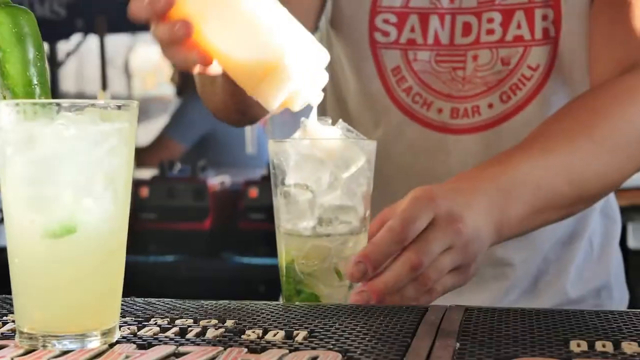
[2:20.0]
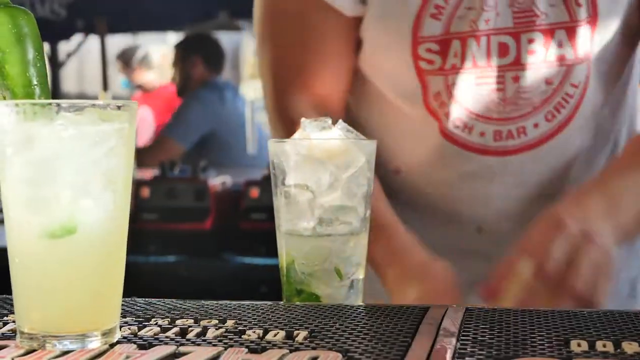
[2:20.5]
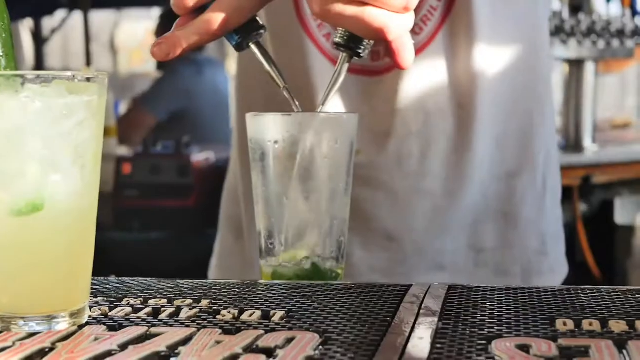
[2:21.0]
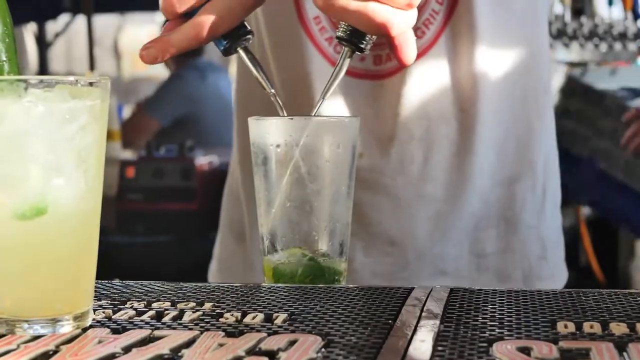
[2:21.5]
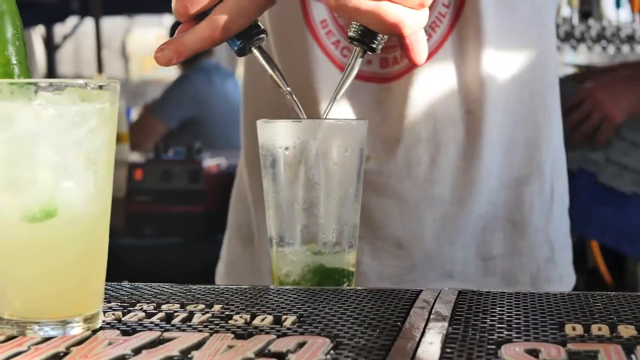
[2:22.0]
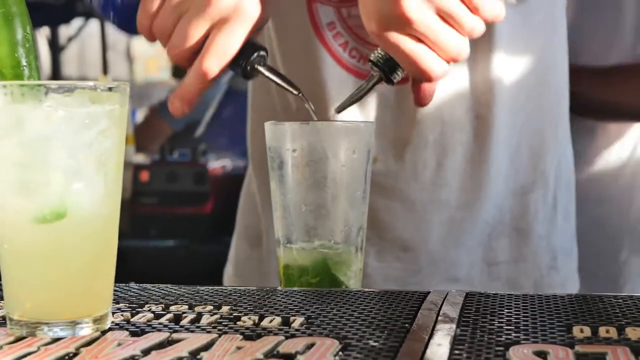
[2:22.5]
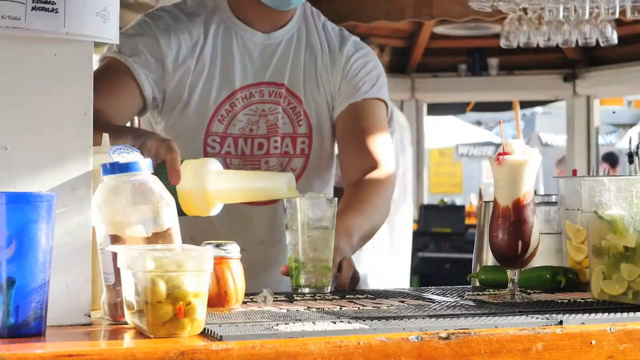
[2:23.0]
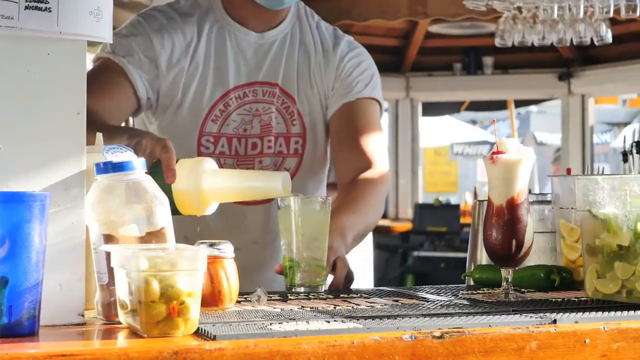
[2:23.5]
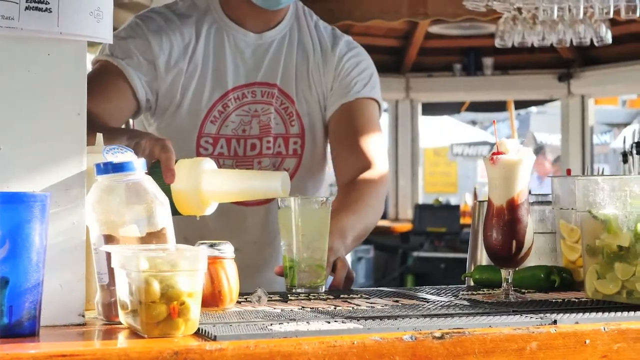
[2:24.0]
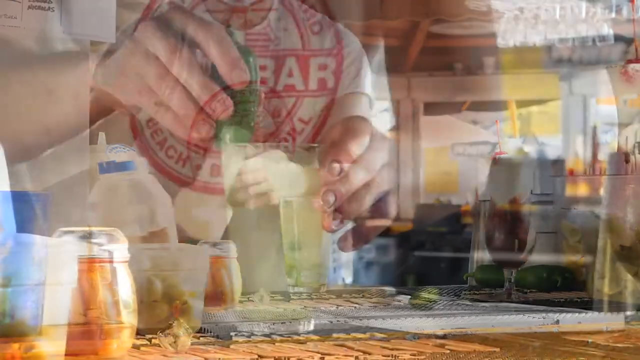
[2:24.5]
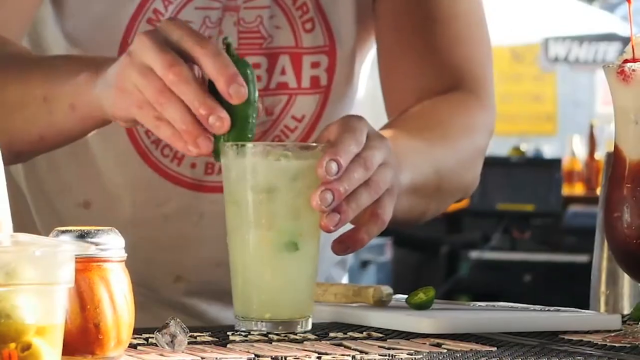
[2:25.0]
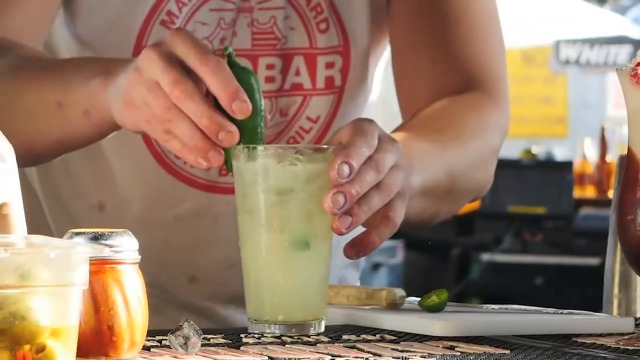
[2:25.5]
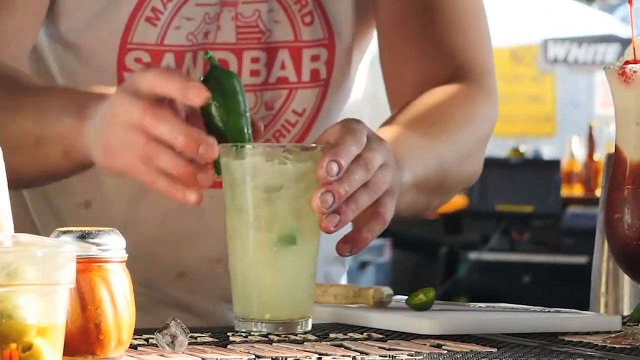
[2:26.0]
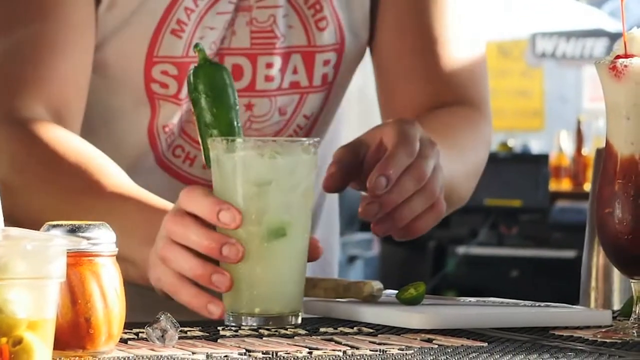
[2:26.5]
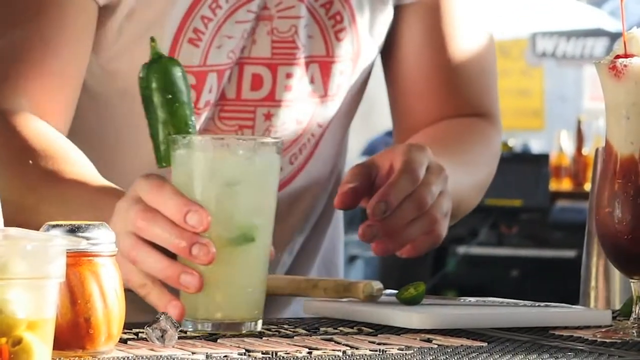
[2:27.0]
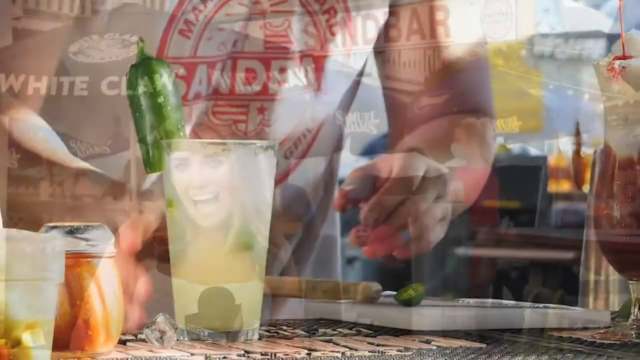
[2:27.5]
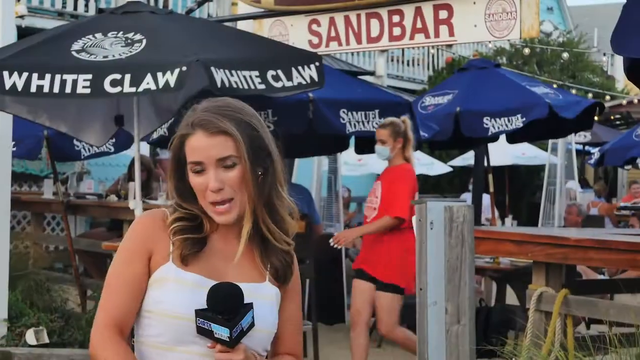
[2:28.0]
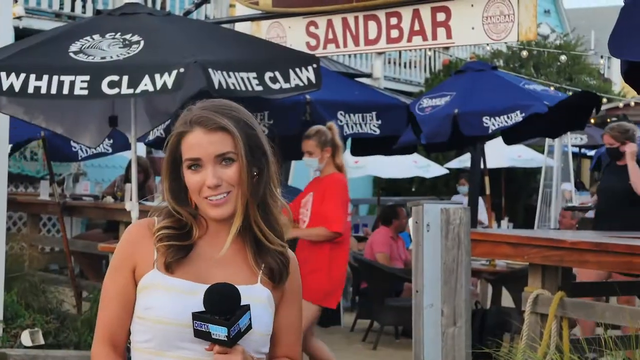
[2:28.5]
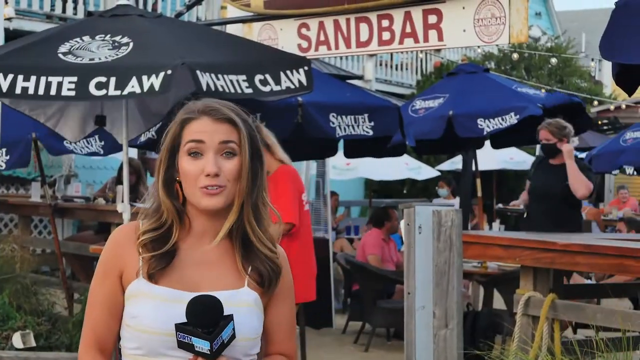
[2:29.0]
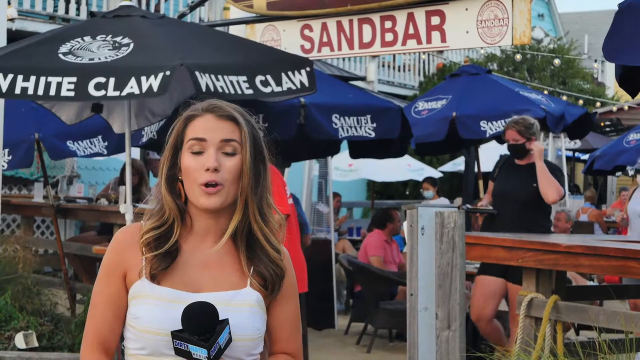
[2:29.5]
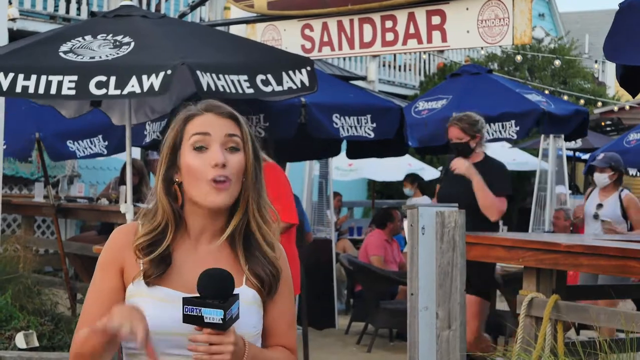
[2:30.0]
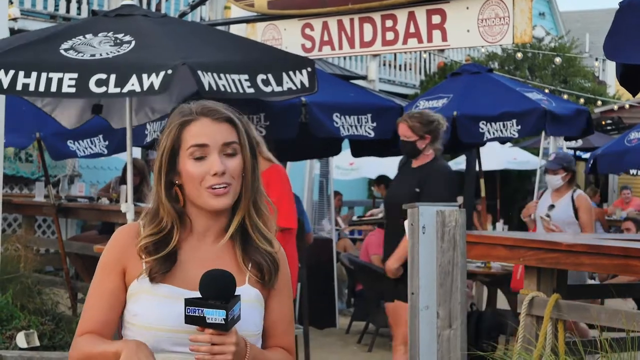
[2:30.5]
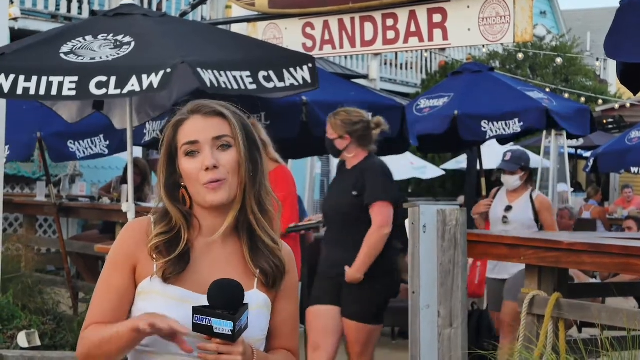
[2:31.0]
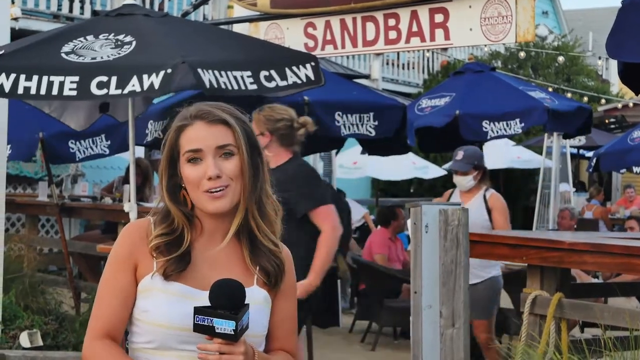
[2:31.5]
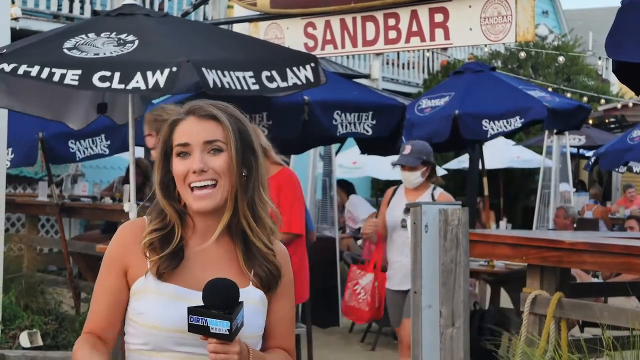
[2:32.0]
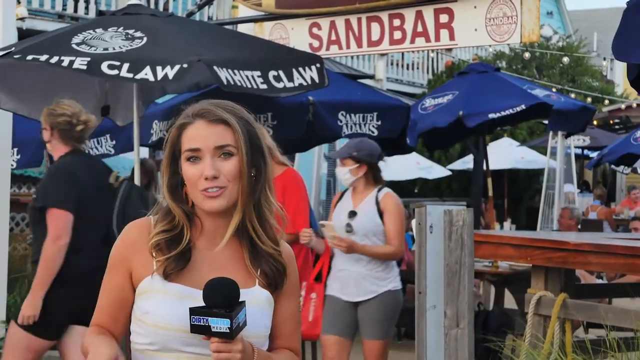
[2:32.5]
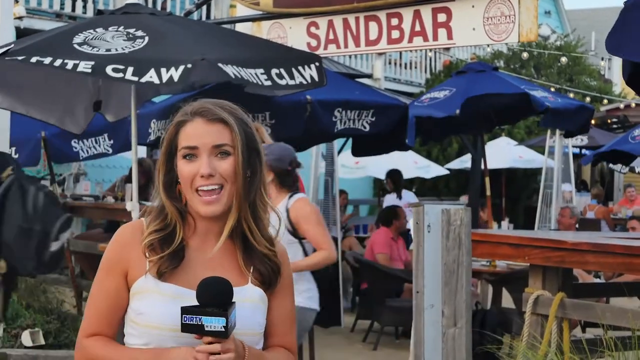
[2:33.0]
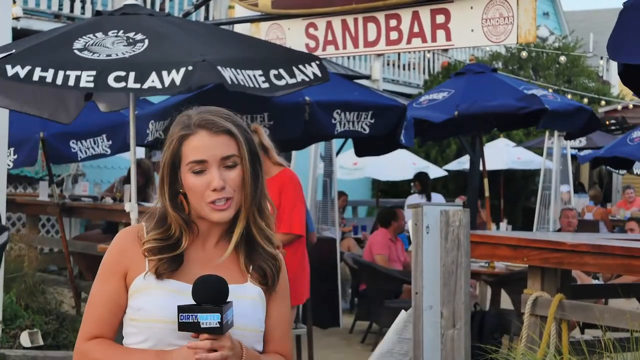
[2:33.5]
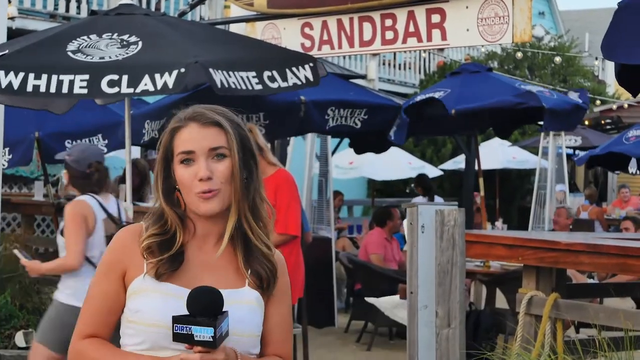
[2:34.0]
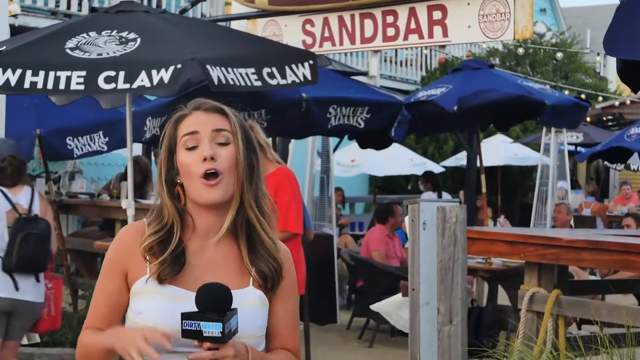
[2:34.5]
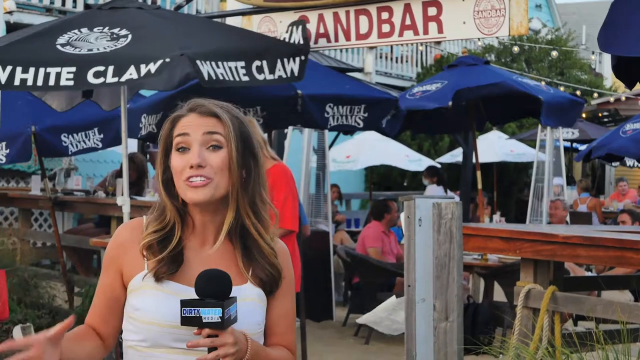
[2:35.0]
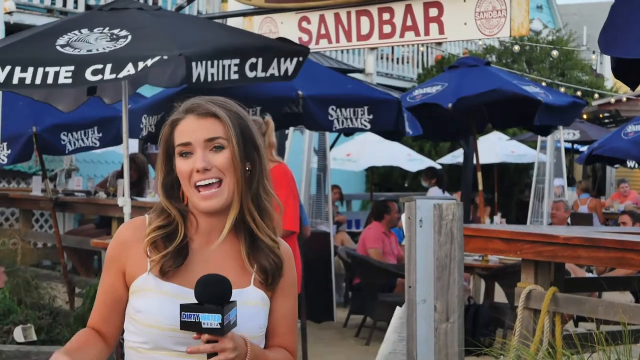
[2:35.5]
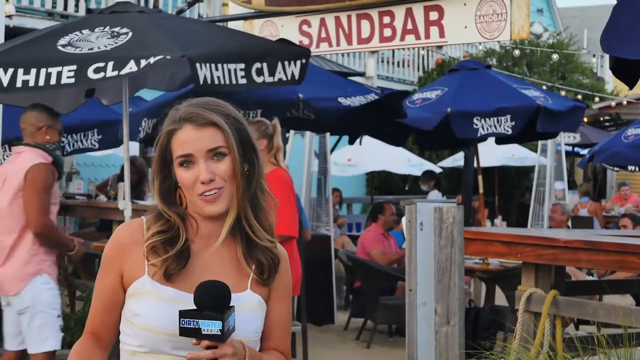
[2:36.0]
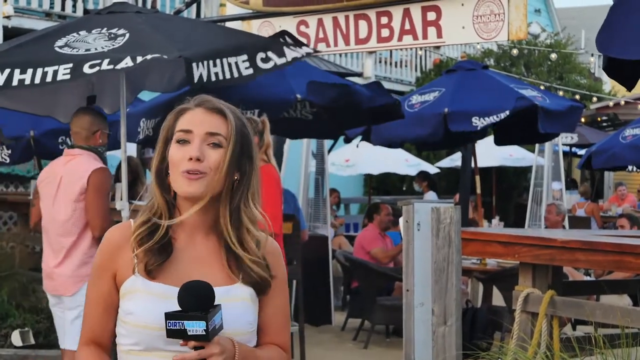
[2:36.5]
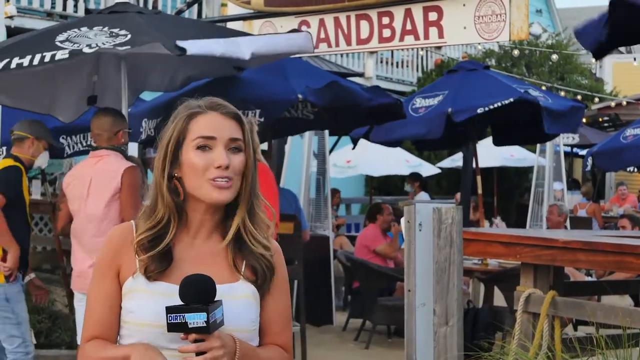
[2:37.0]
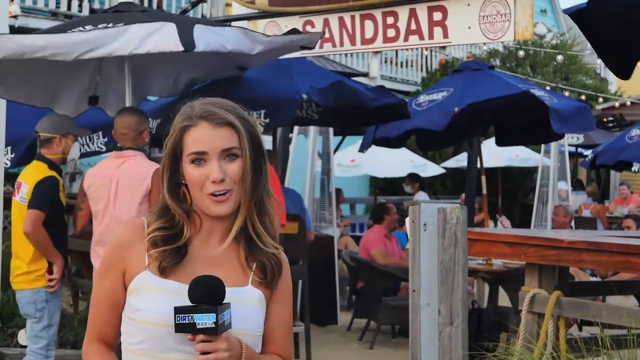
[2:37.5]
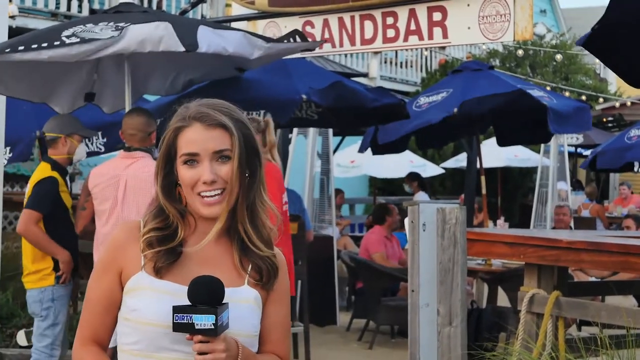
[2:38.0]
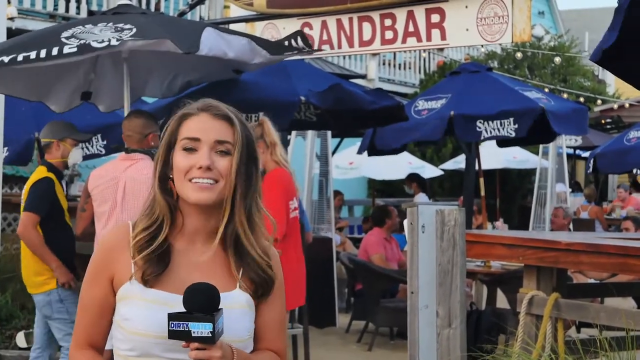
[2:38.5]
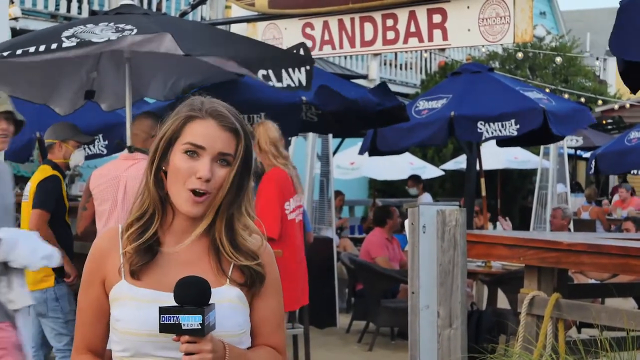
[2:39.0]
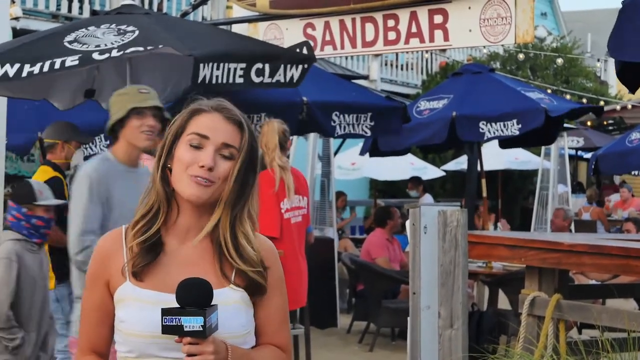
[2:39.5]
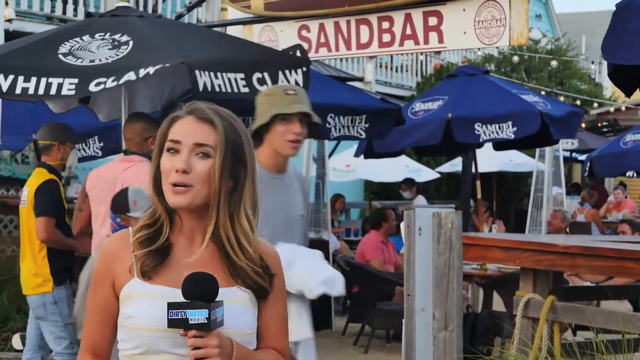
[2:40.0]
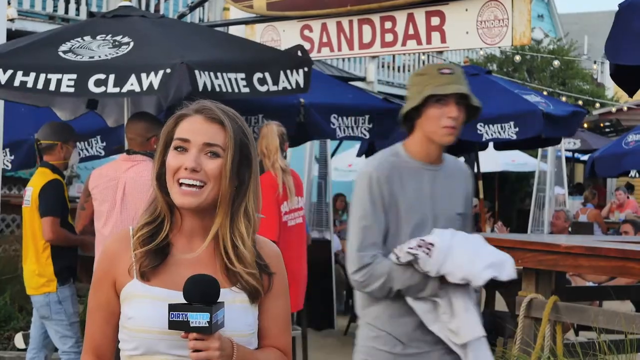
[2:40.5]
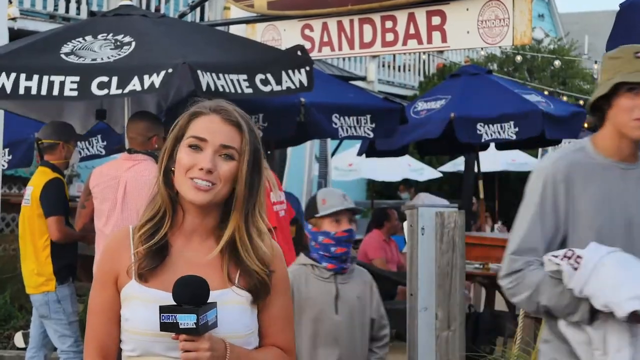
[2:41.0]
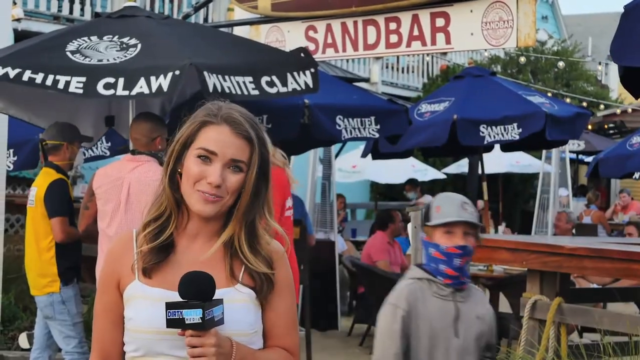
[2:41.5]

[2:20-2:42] A bartender prepares drinks left and right: one with ice, another with jalapeno, and another with lemons that he smashes in the glass. He seems to be a very talented bartender. The scene then returns to the reporter, standing behind the Sandbar, with some White Claw umbrellas and some black and blue umbrellas. A woman in a red t-shirt wears a blue mask and has blonde hair braided in a ponytail. Some ladies are in the background, and the scene looks windy. This seems to be the end of the report. The reporter, Alex Guarino, wears a white top, has brown hair and holds a black microphone.